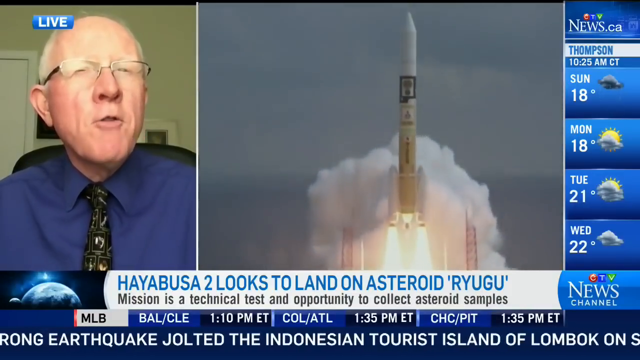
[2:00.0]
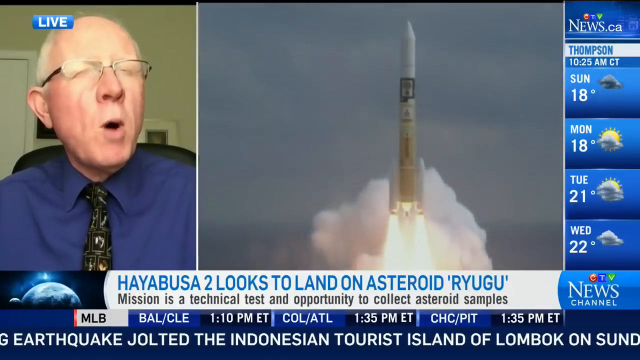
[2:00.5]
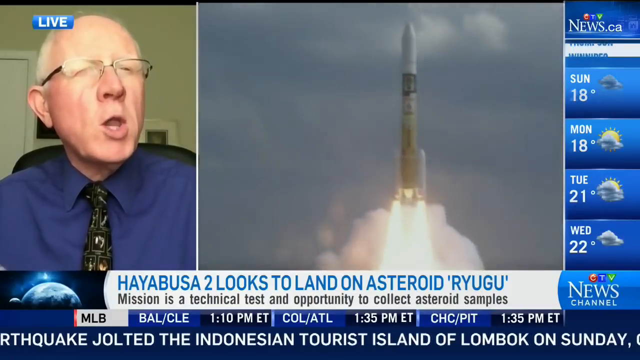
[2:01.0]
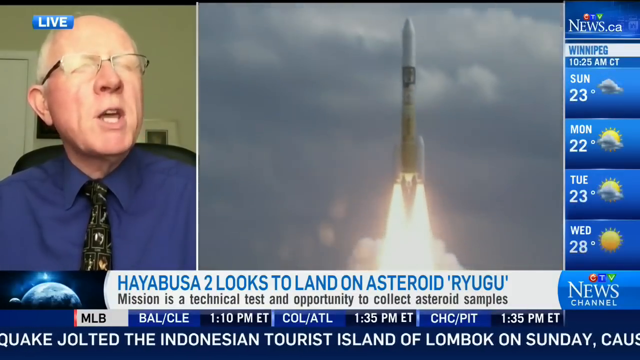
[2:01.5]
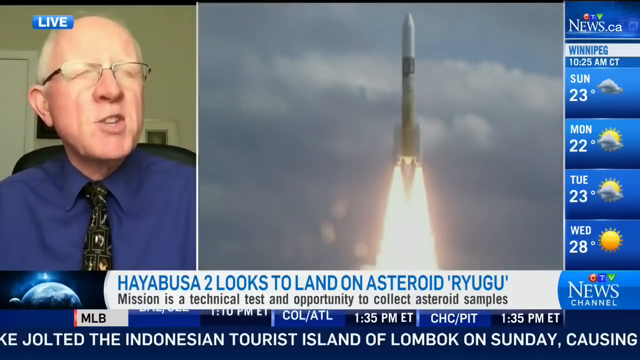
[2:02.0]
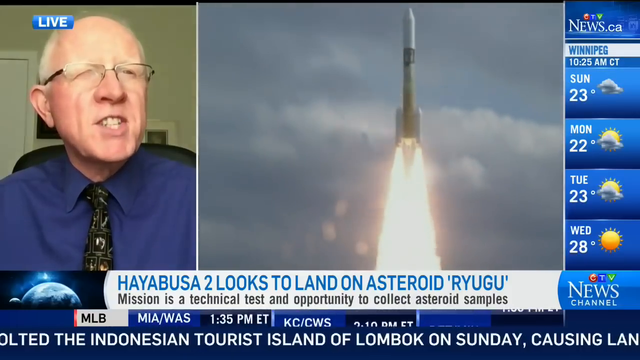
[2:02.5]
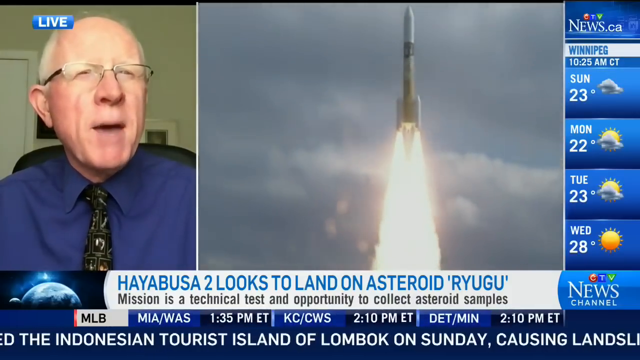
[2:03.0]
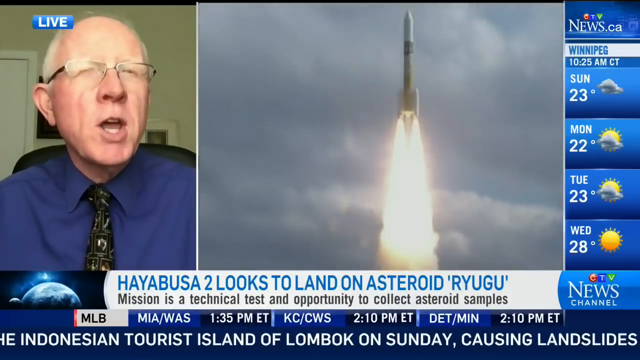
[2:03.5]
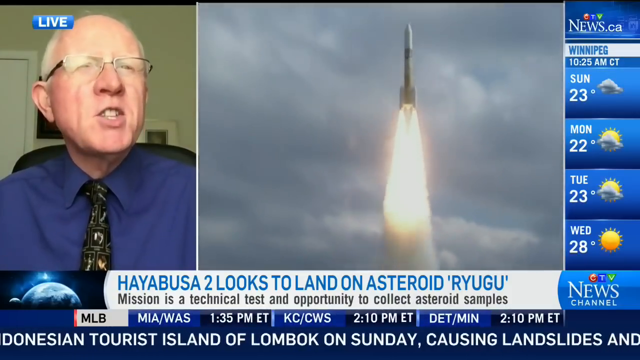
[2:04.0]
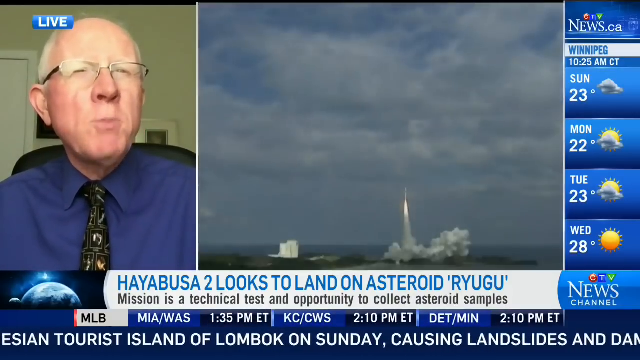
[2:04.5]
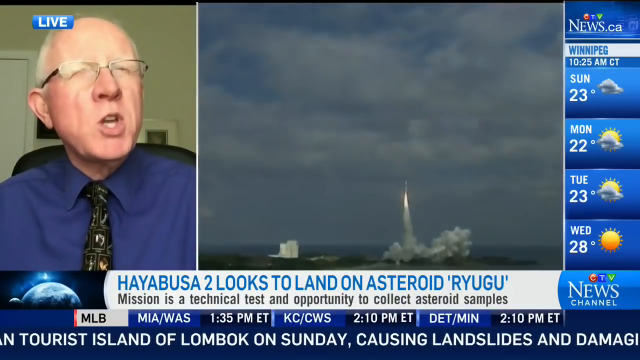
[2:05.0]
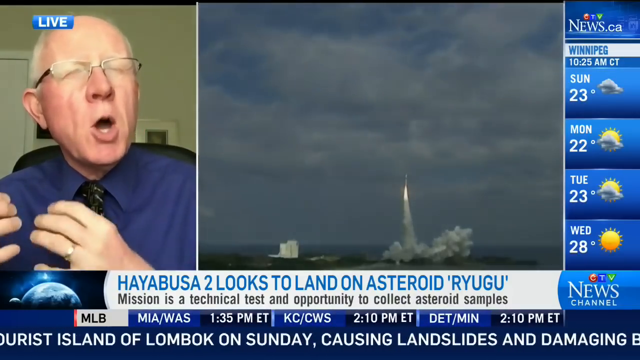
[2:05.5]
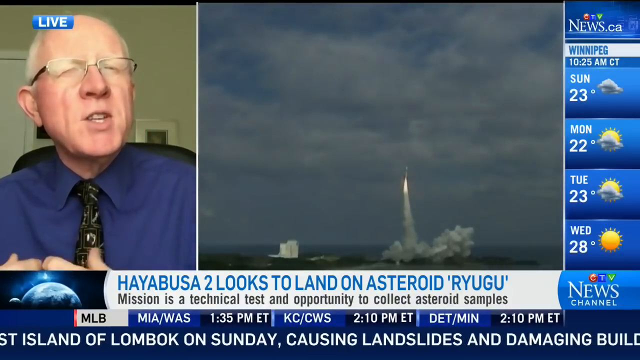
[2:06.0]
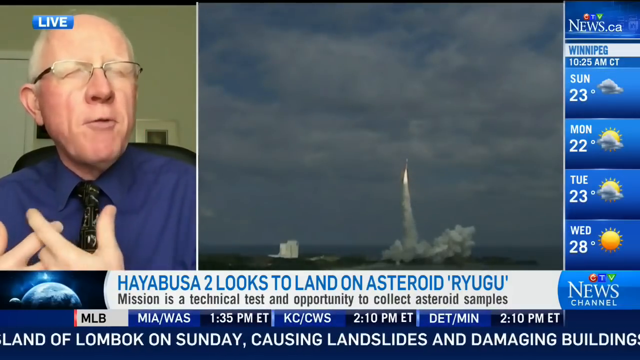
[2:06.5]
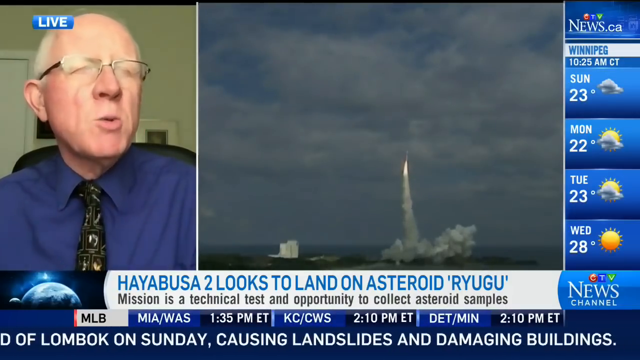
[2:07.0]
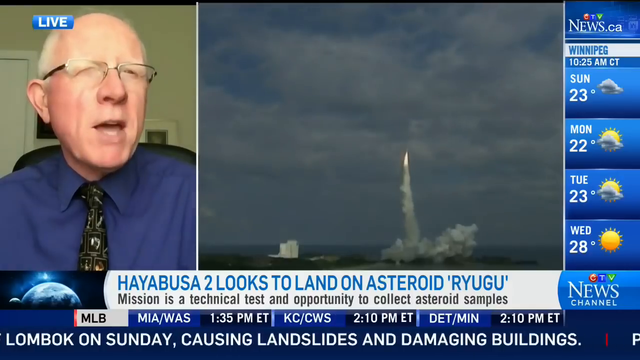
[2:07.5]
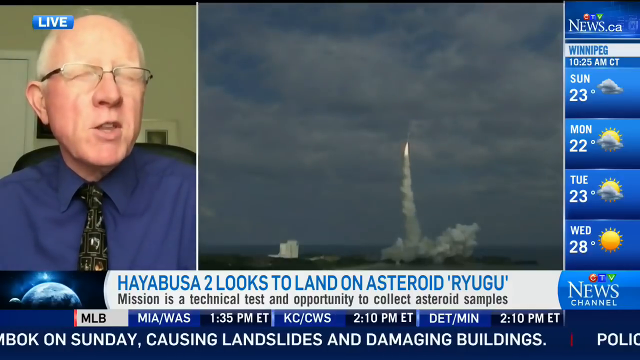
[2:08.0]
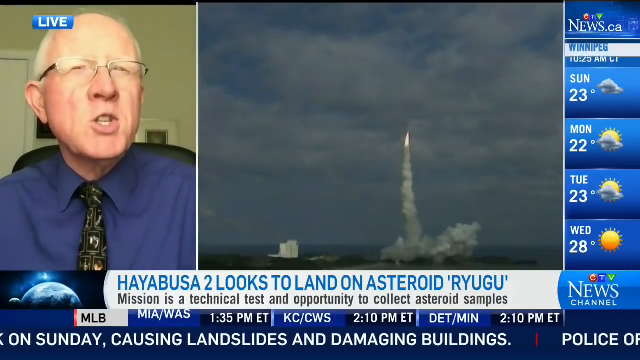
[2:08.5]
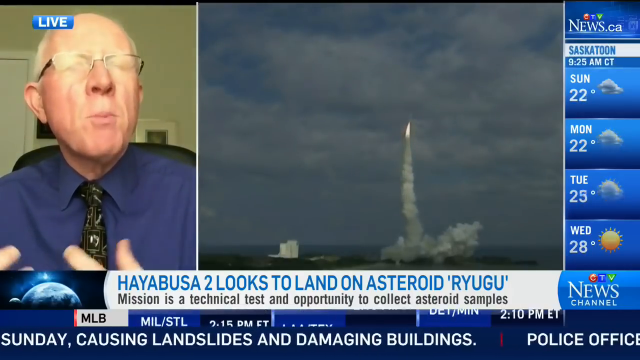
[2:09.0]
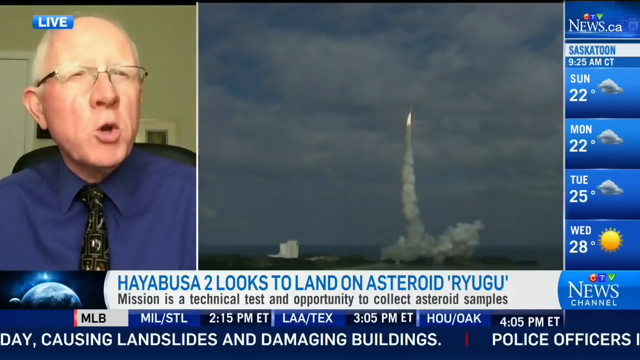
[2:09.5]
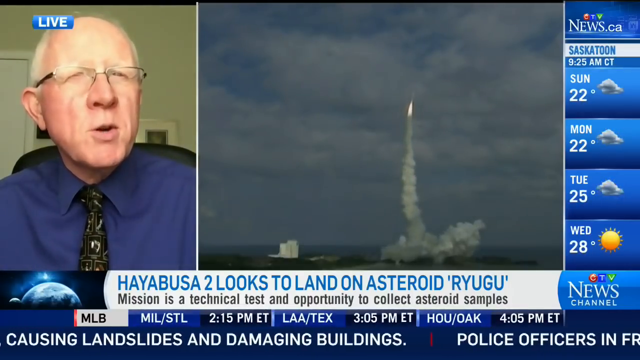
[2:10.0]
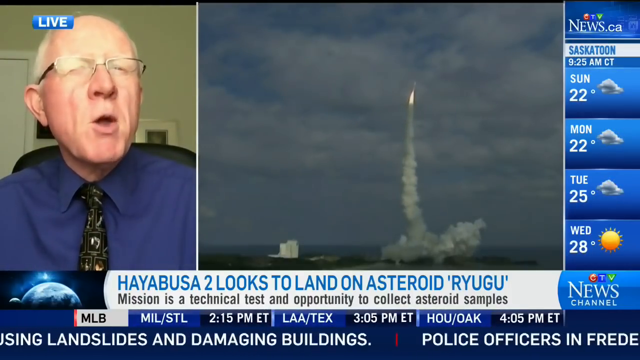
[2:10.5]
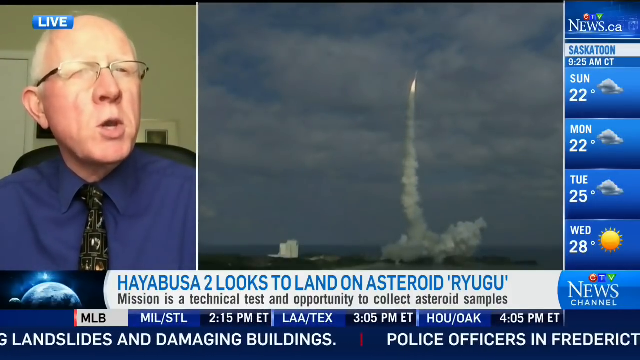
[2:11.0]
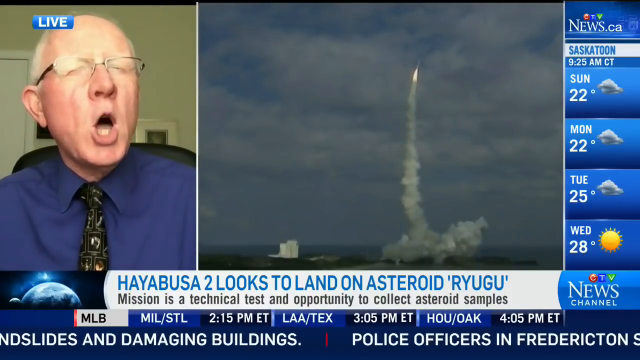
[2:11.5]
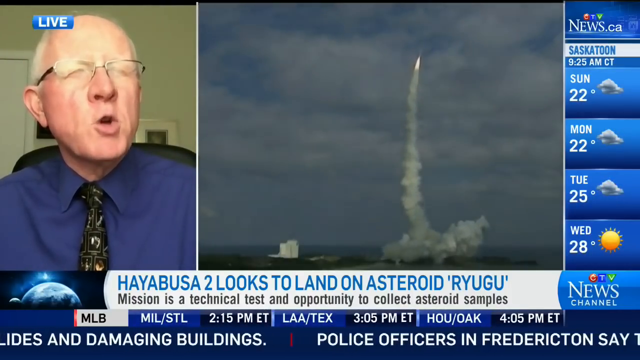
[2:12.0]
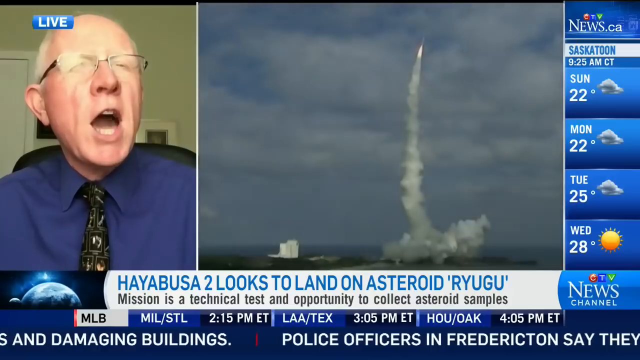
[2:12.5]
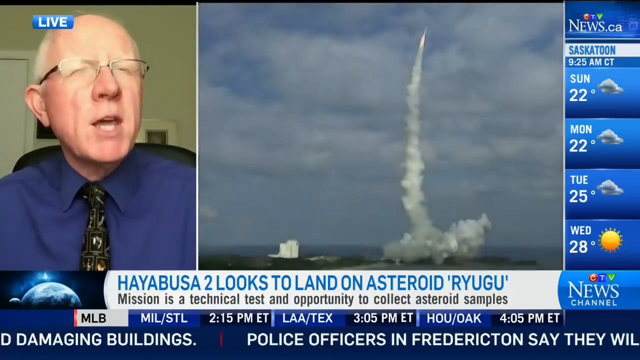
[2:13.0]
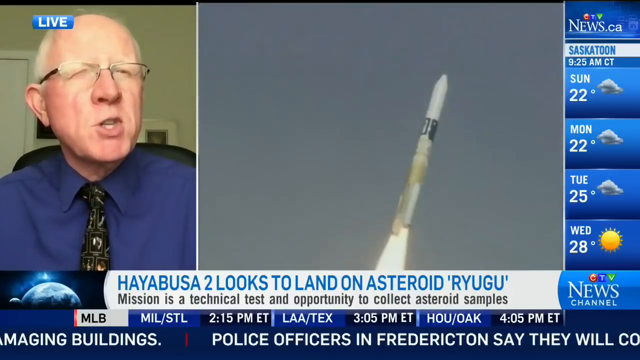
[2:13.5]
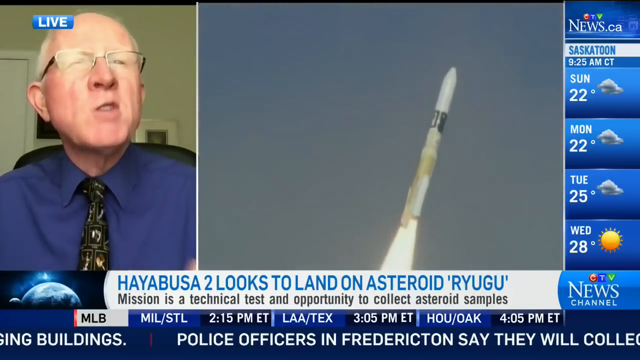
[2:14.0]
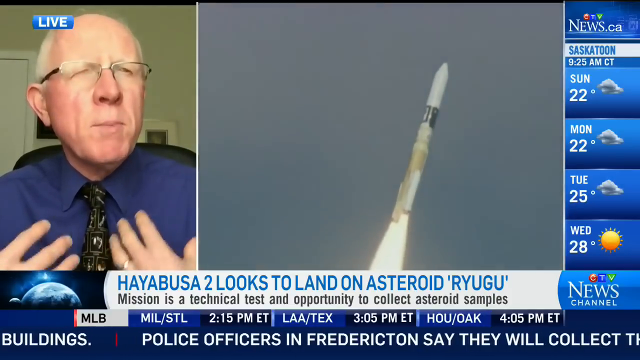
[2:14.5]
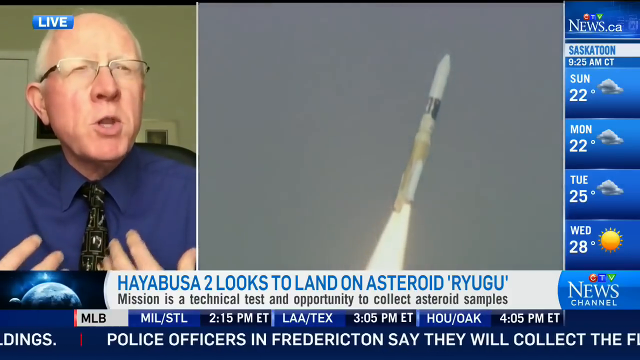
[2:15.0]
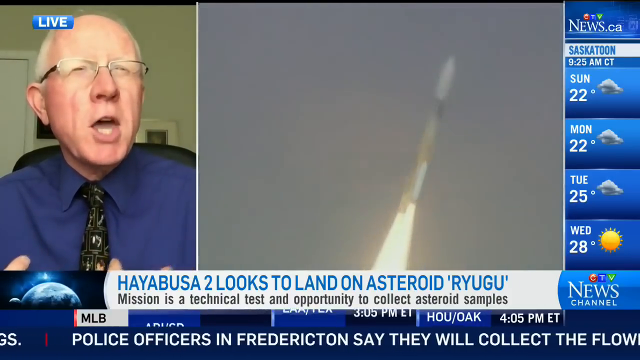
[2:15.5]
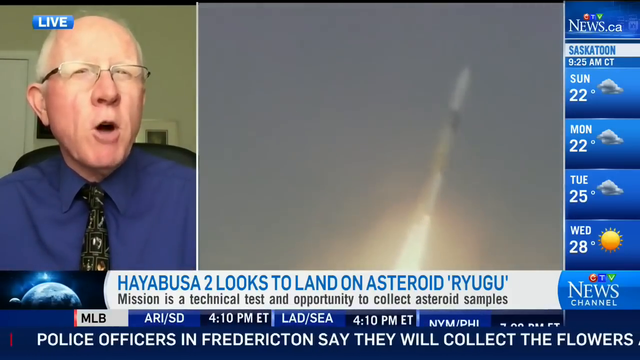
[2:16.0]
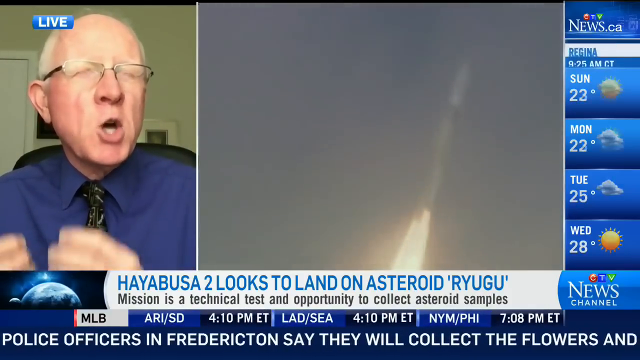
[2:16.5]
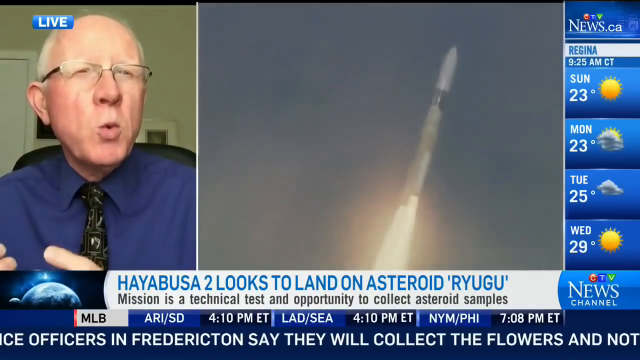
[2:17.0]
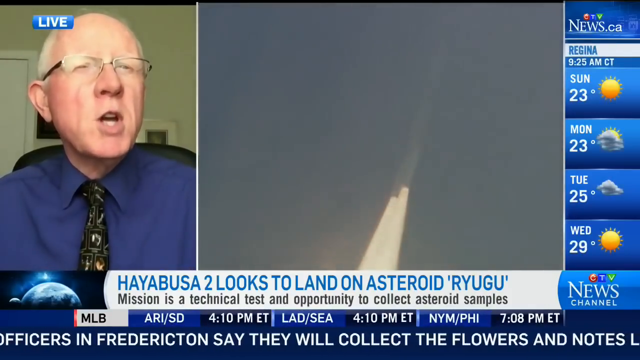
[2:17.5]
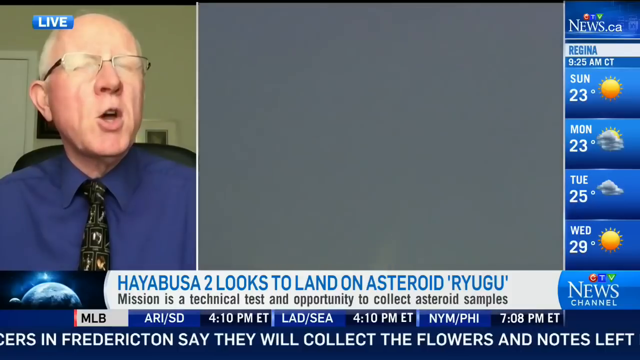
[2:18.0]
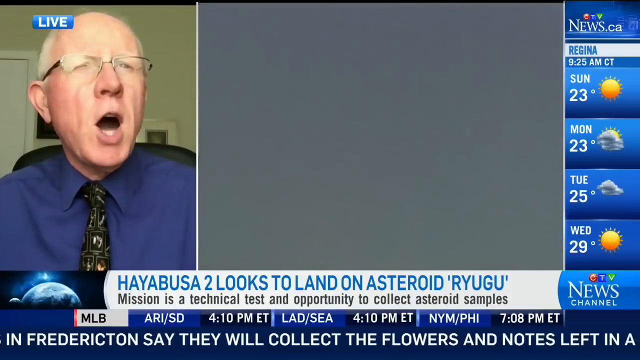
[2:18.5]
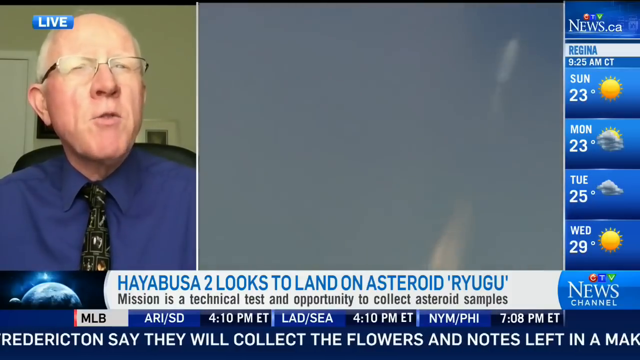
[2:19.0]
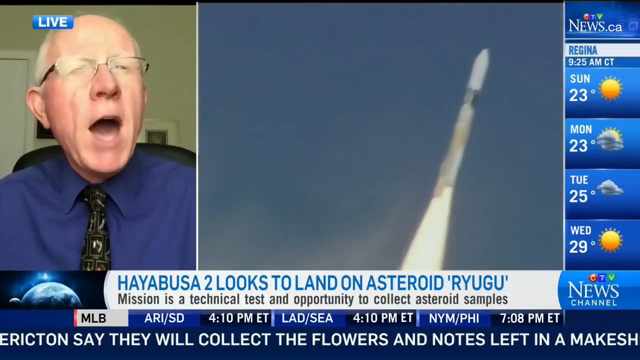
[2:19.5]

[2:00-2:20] Explosive gases propel the rocket up into a very grey sky. The weather forecast moves to Winnipeg: cloudy and 23 degrees on Sunday, sunny intervals and 22 degrees on Monday, sunny intervals and 23 degrees on Tuesday, and 28 degrees and very sunny on Wednesday. Today's Major League Baseball matches are listed: Miami and Washington, Detroit and Minnesota, Milwaukee and St Louis, LA and Texas Rangers, and Houston and Oakland. The weather in Saskatoon shows 22 degrees and cloudy on Sunday, 22 degrees and cloudy on Monday, 25 degrees and cloudy on Tuesday, and a blazing 28 degrees of sunshine on Wednesday. Professor Delaney is still gesturing with both hands. The weather for the northern mining town of Thompson then appears.